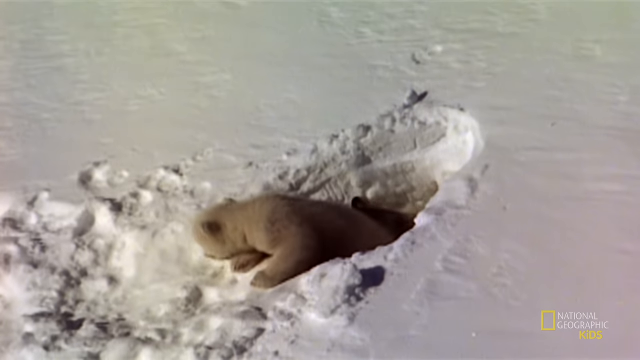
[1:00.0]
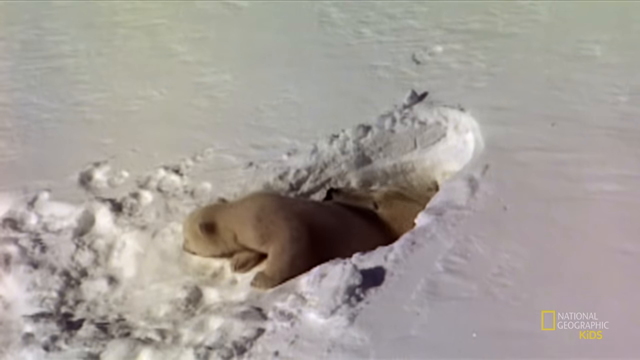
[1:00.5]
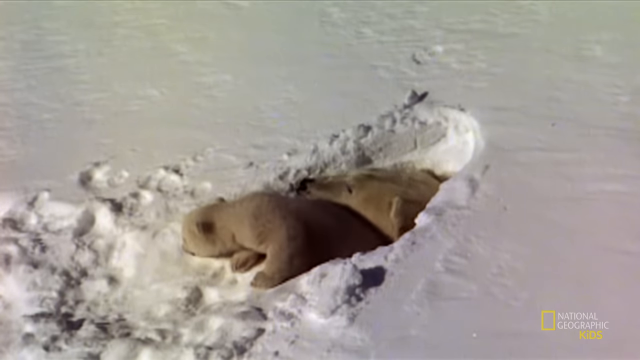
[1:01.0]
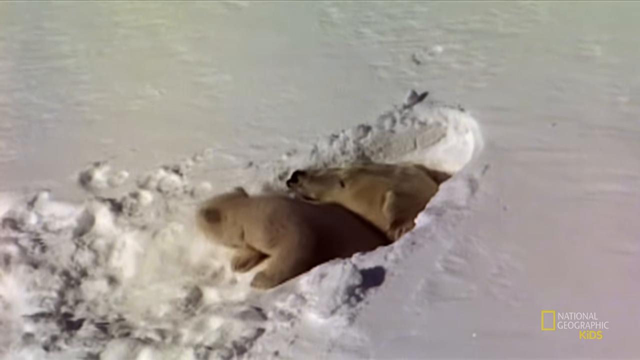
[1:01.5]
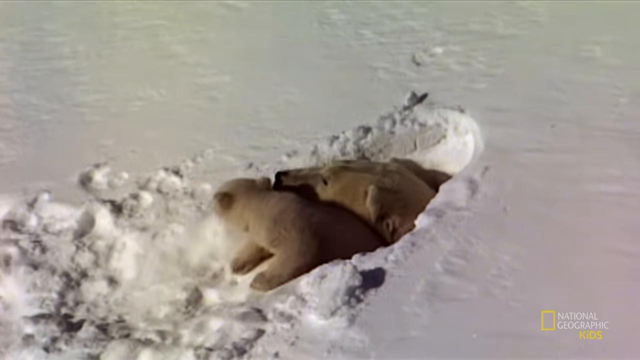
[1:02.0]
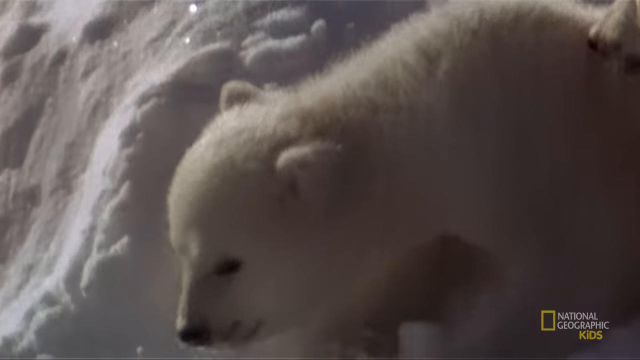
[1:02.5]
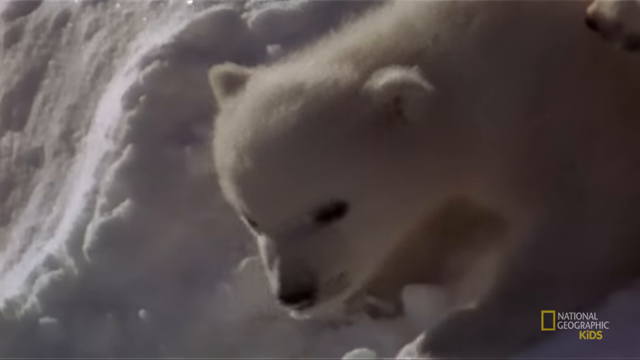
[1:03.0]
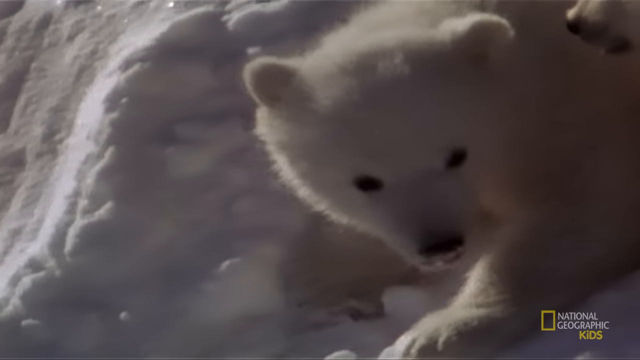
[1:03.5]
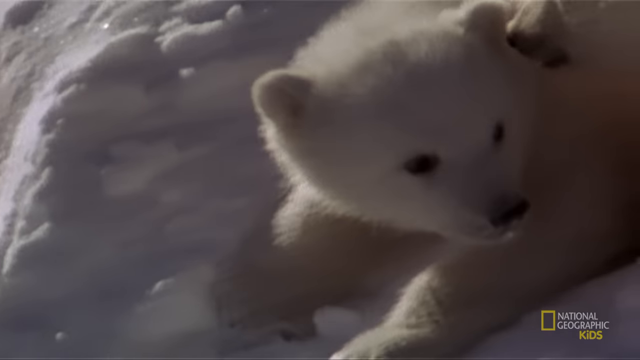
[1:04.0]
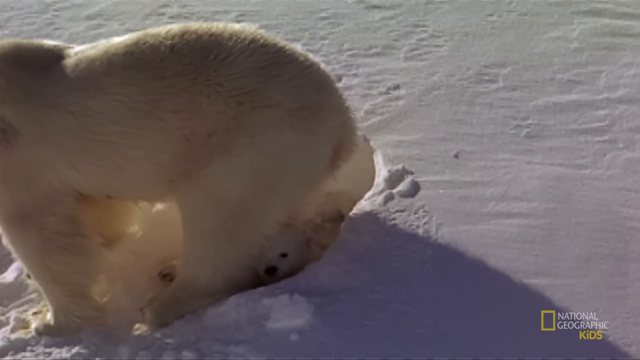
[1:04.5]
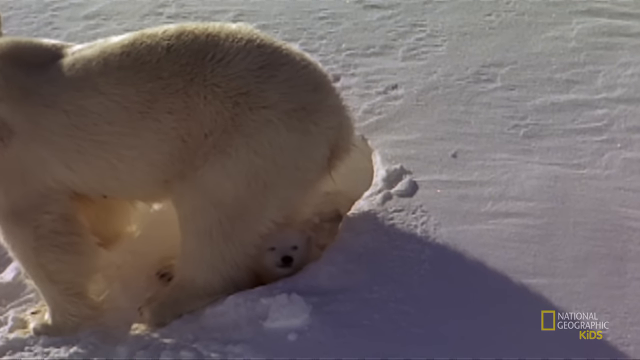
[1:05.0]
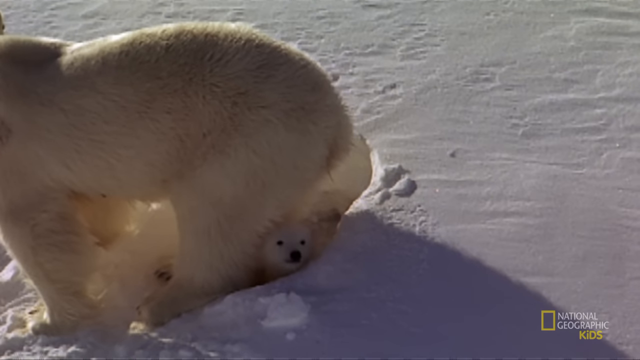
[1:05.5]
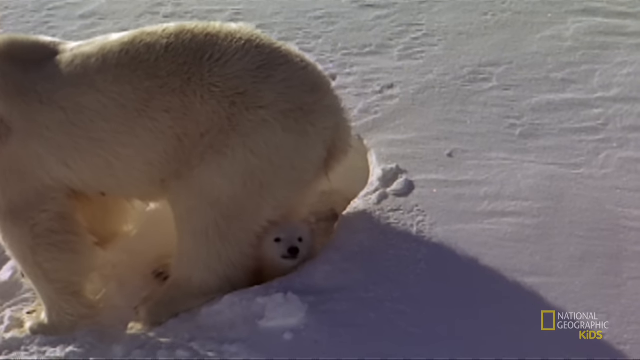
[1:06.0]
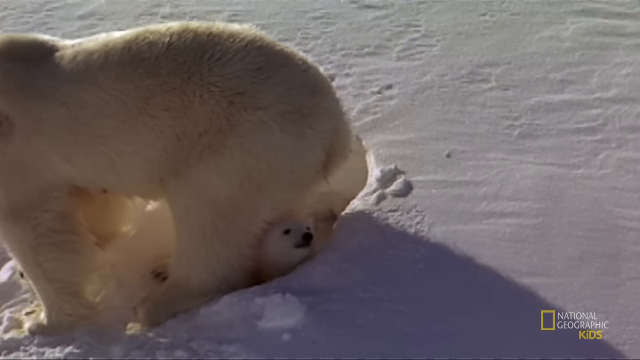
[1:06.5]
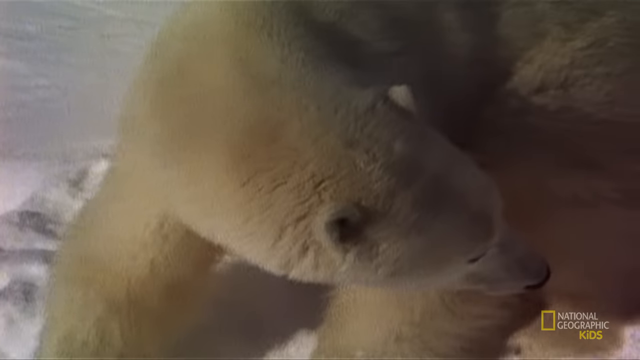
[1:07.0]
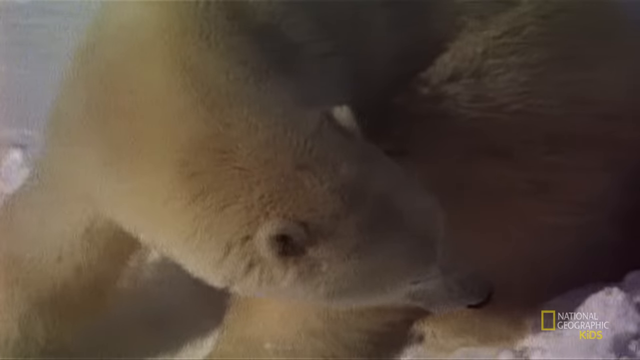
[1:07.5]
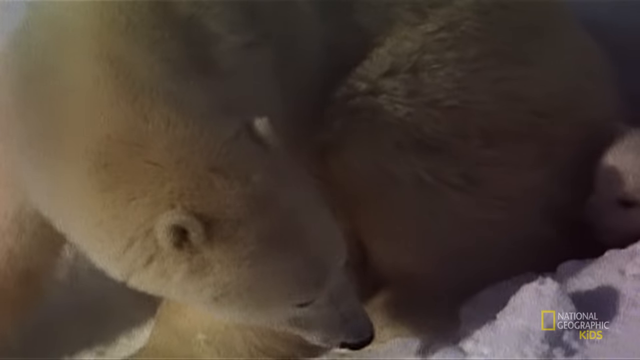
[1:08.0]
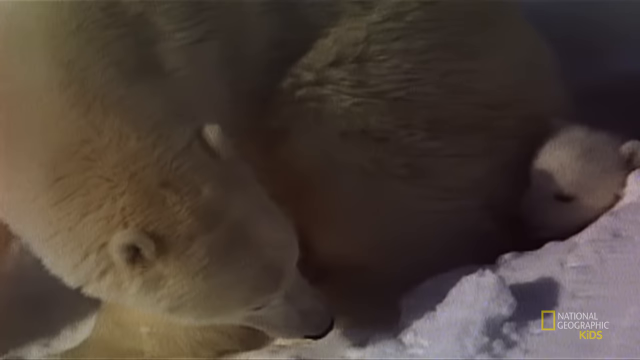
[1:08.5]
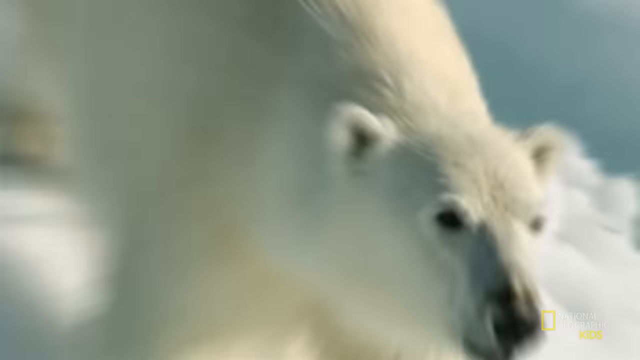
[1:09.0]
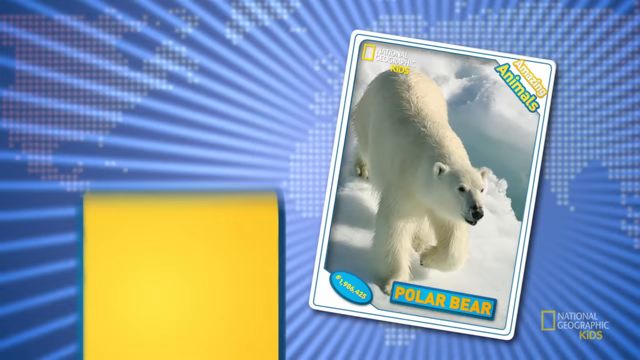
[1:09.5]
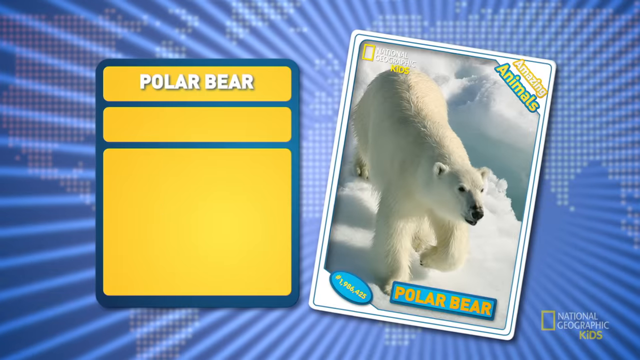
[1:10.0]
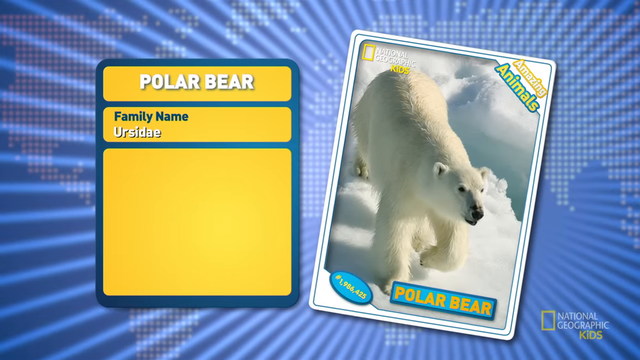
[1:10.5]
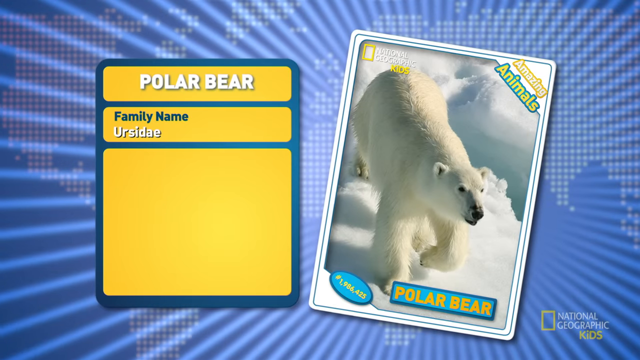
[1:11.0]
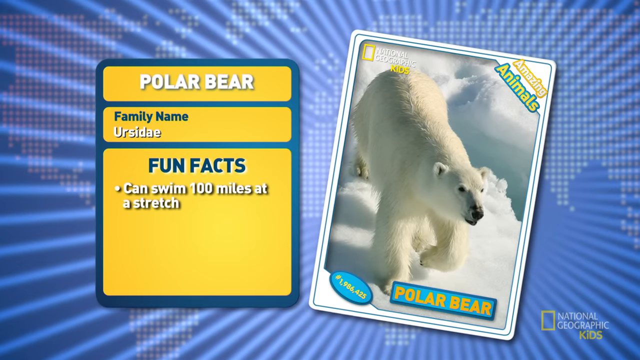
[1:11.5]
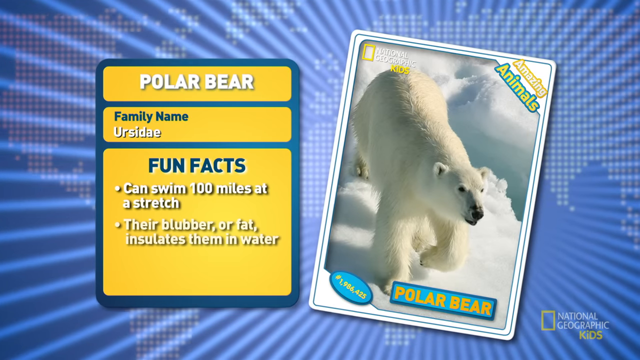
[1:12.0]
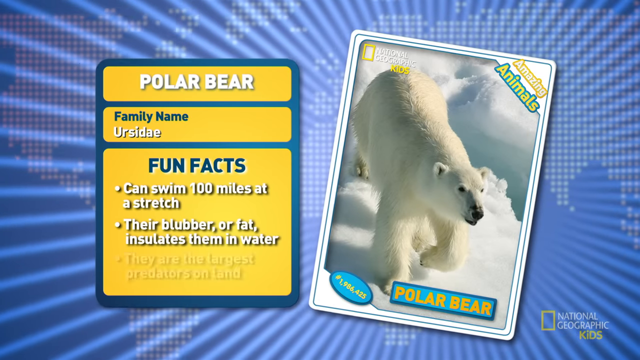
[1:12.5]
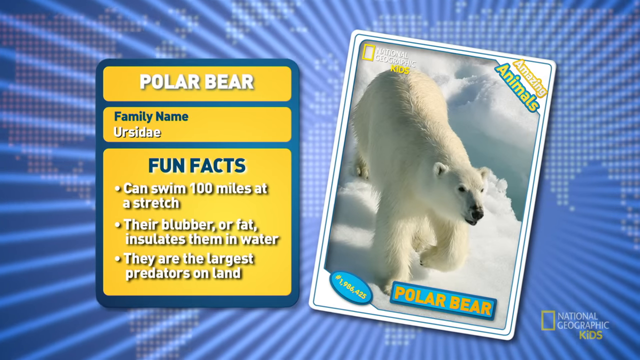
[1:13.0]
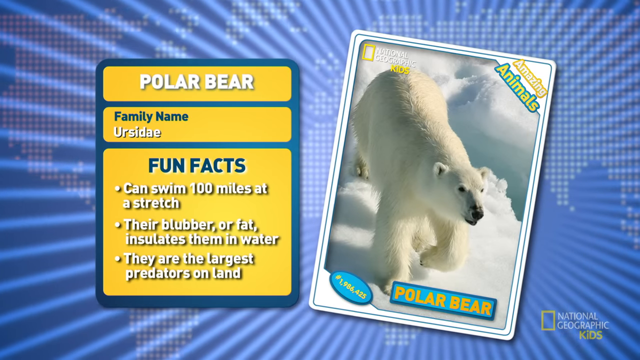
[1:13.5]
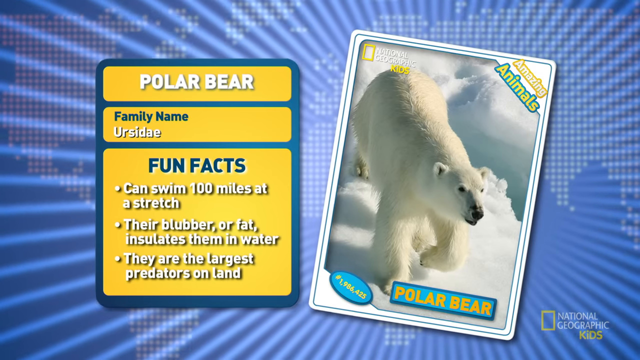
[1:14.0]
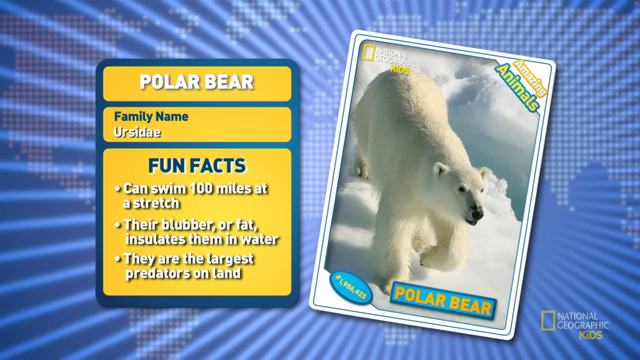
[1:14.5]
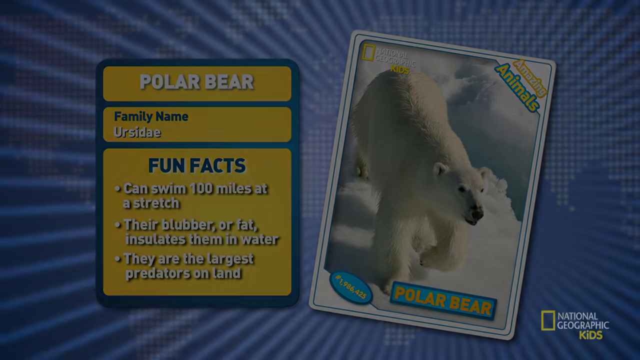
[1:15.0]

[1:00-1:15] A little polar bear family comes out of a hole in the snow. The babies poke out first, then the mom pokes out while the babies stay in the hole. She bends around and smells the babies. A screen follows with the blue lines seen at the start of the video, showing a yellow card of facts about the polar bear outlined in green. The top yellow box says "polar bear," the next box down says "family name" "URSIDAE," and the next yellow box is "fun facts," reading "can swim 100 miles at a stretch," "Their blubber or fat insulates them in the water" and "They are the largest predators on land." Next to the yellow card is a card with a picture of a polar bear, with "Polar Bear" on the bottom and "Amazing Animals" in the top right corner.